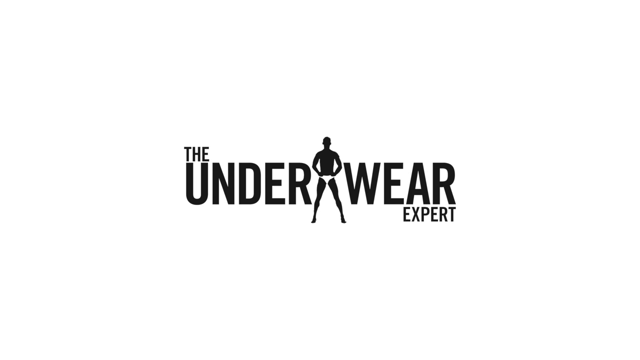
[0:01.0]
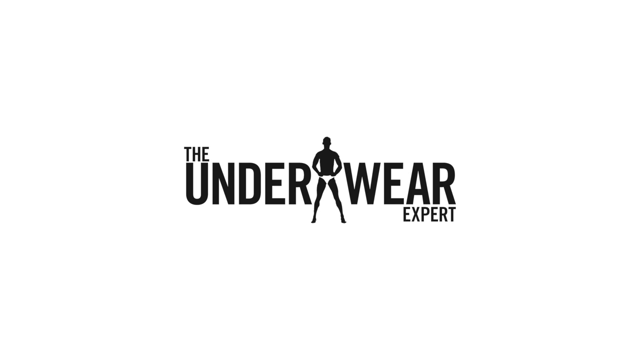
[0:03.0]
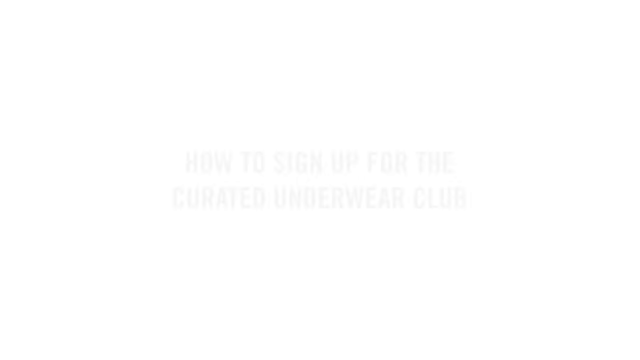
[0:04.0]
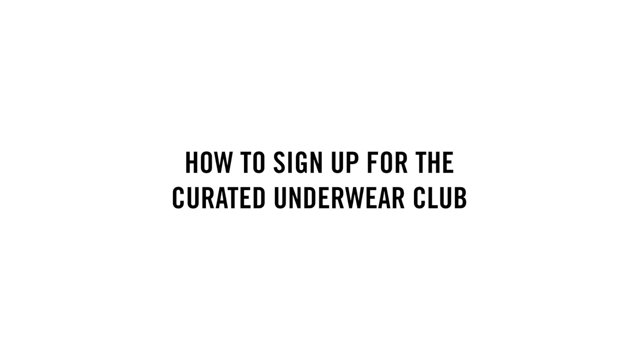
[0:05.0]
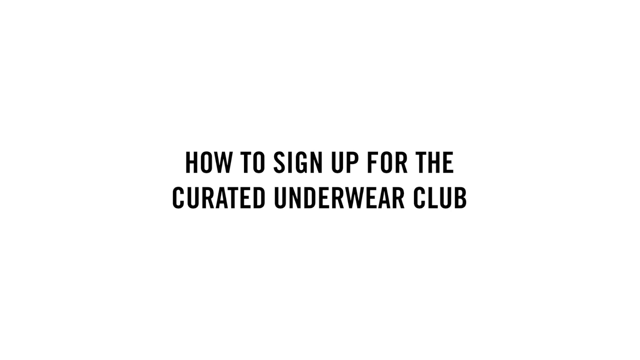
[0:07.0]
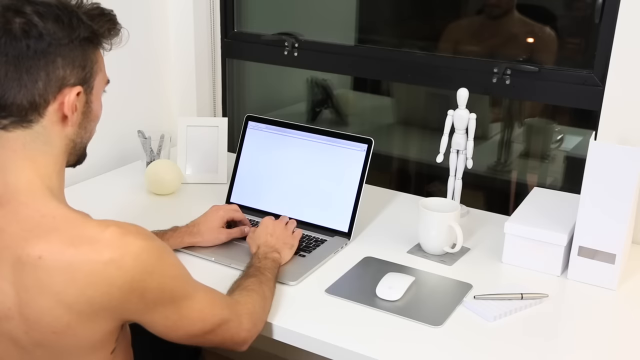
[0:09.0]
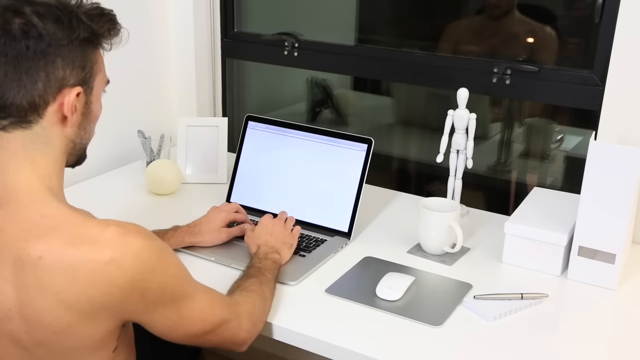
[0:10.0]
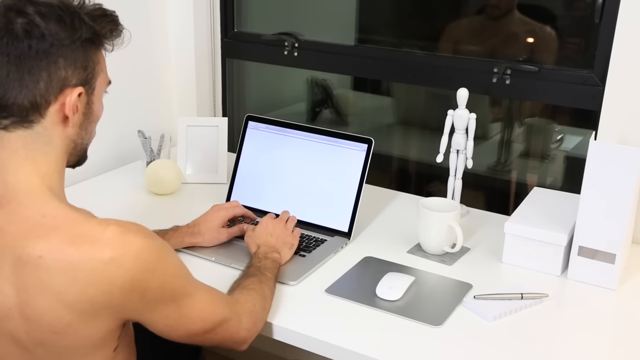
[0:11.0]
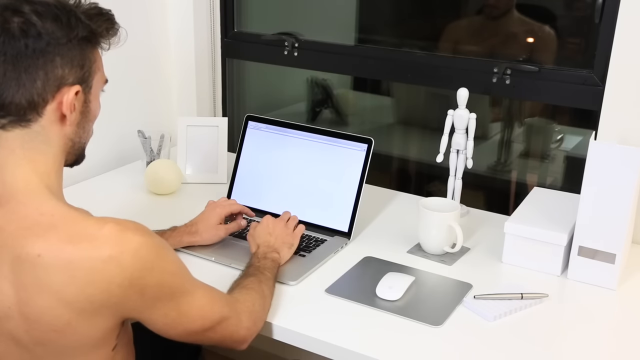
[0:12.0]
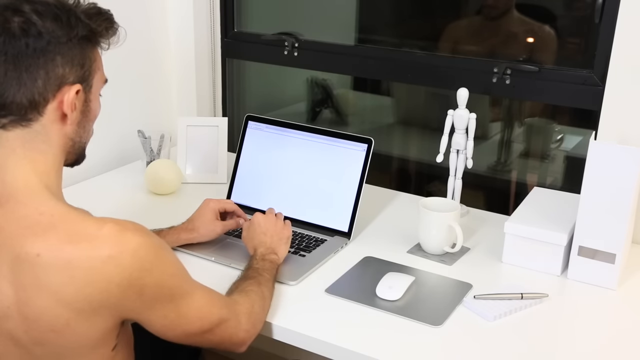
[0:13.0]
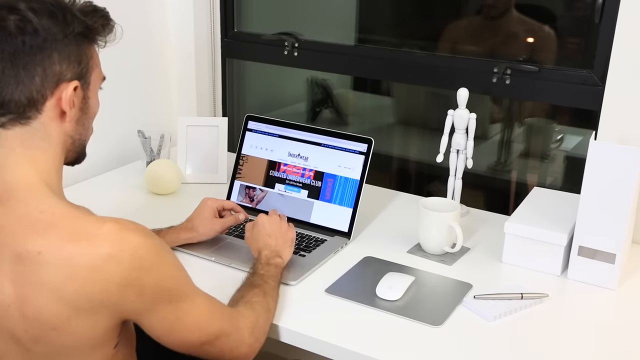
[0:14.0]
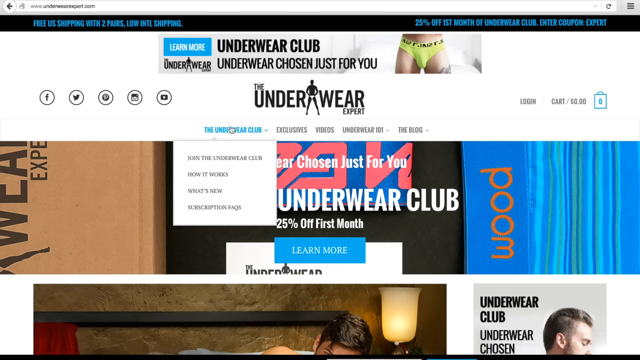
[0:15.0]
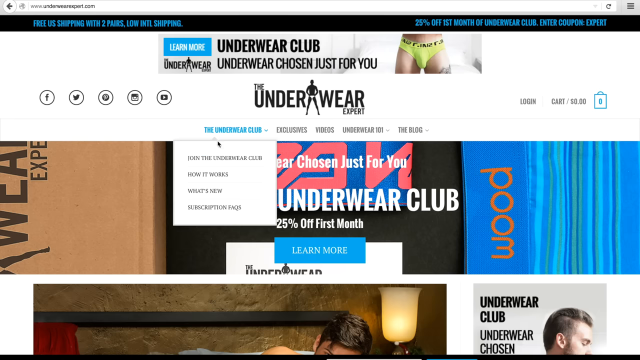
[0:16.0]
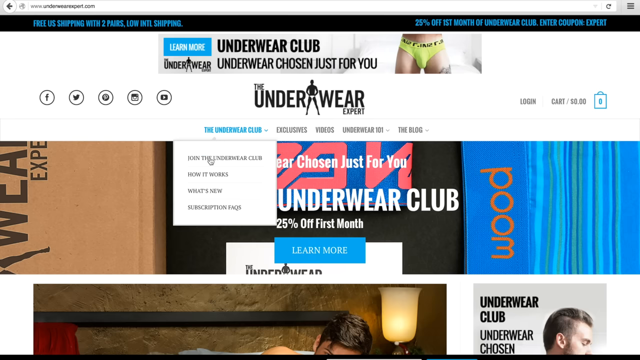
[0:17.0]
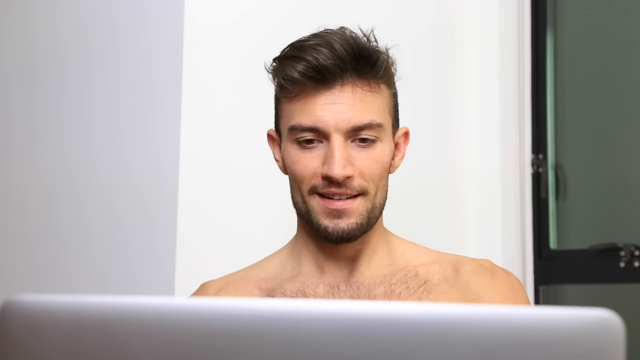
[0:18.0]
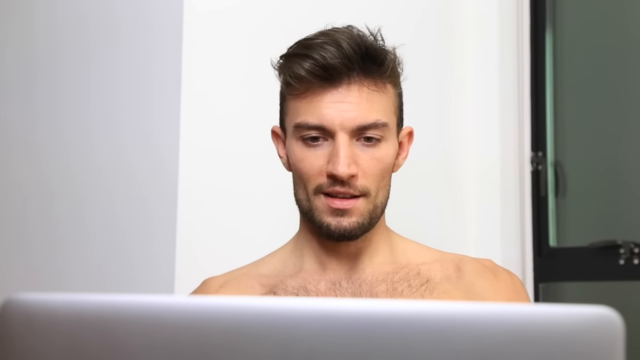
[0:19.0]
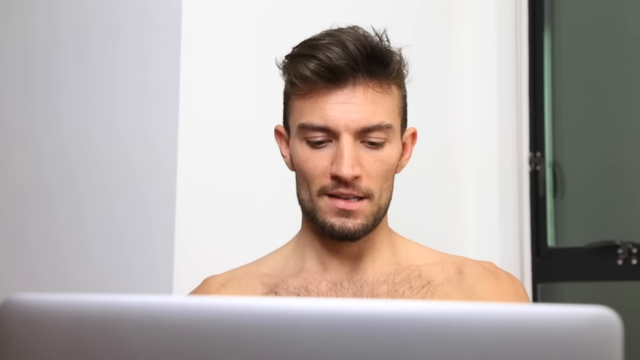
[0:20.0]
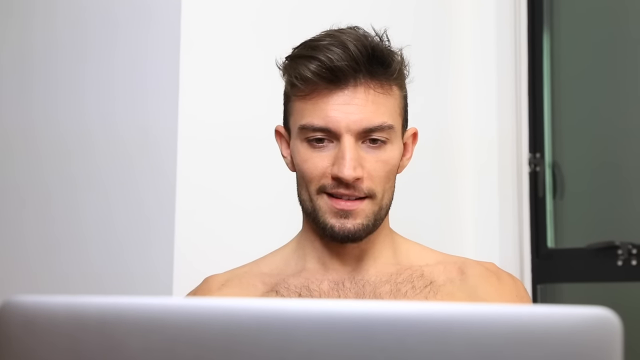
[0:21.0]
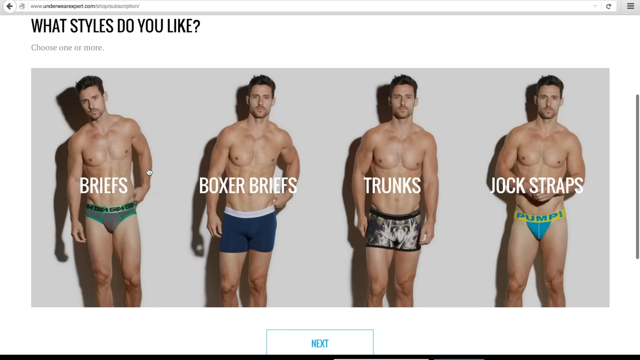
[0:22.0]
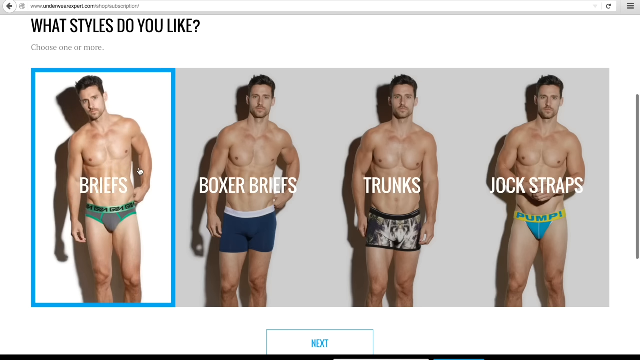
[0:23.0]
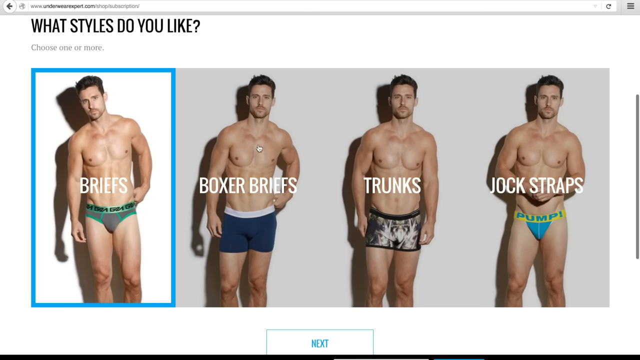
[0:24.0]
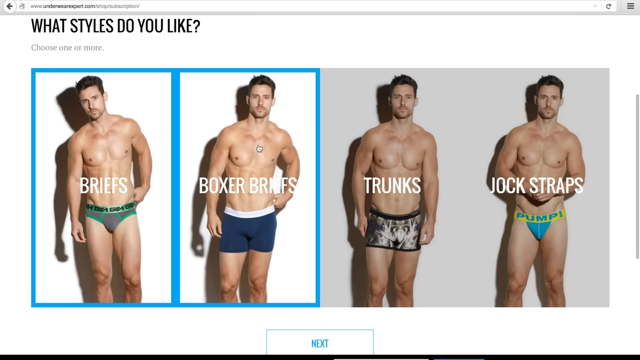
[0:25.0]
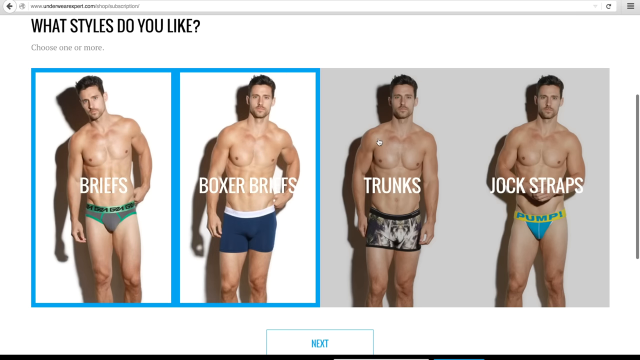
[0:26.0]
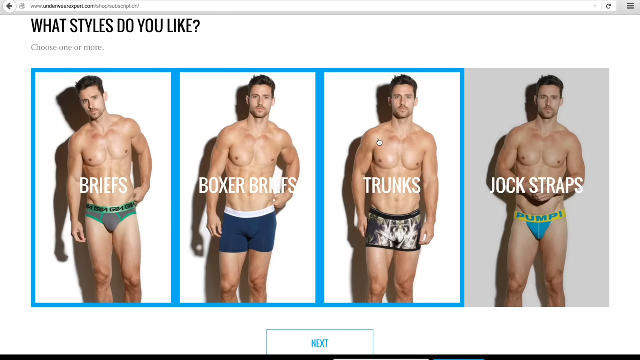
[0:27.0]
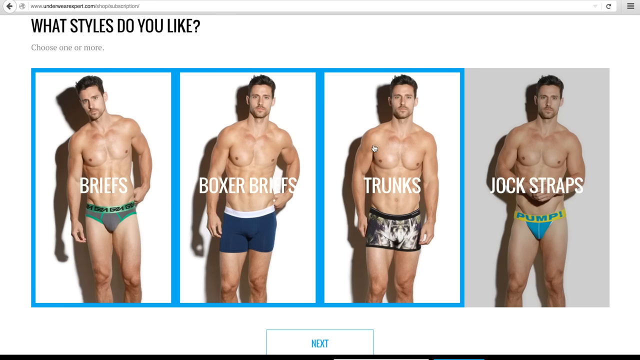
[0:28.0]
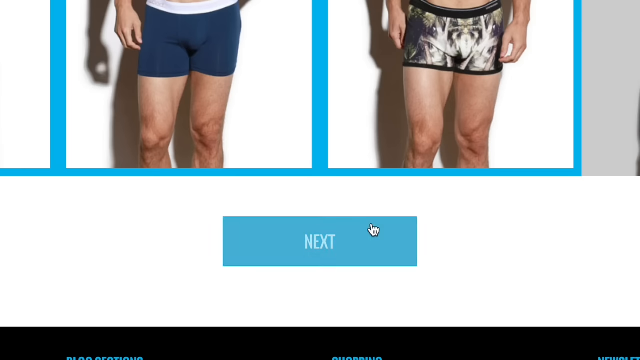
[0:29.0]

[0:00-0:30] The video opens with a caption reading "the underwear expert" on a white background, with an illustration of a person standing between the words "under" and "wear" in "underwear". Information appears on screen that says "how to sign up for this". Next, a middle-aged man with nothing on his upper body is at a laptop. His reflection is visible in a mirror in front of him, and there is a portrait of a white cap and a white mouse. His hands rest on the laptop keyboard as he tries to type something. He opens a page whose headings read "underwear club" and "underwear chosen just for you", and a caption reading "underwear club" appears. The camera focuses on the page on the laptop, and then the man's face is shown again. Footage of different types of underwear follows: someone wearing briefs, then boxed-up briefs, then pants, then another boxed-up item, under a headline that reads "what type do you like".